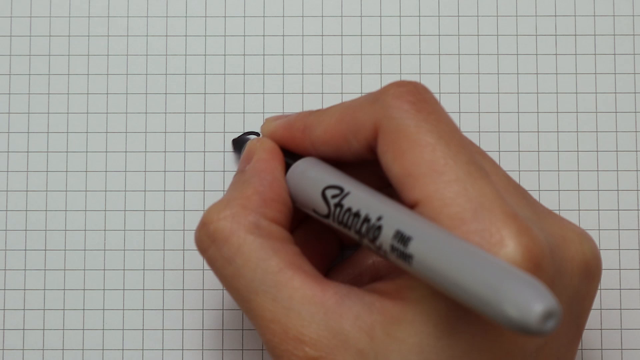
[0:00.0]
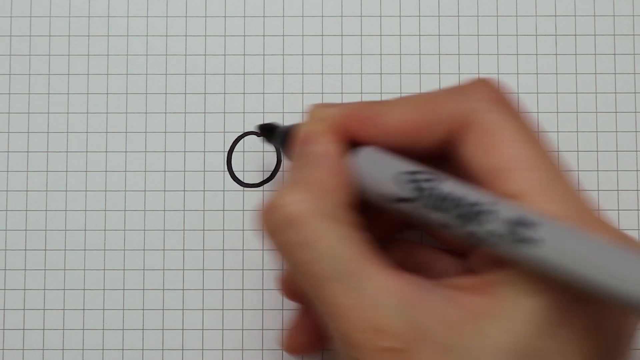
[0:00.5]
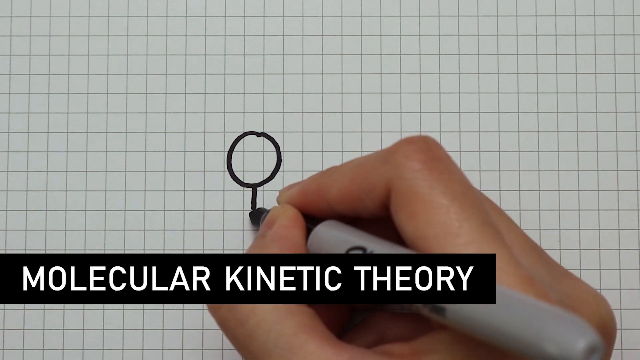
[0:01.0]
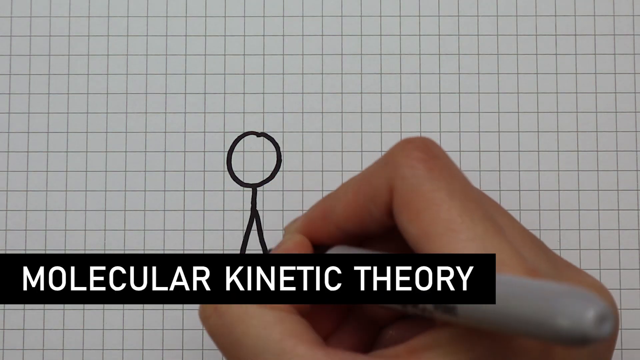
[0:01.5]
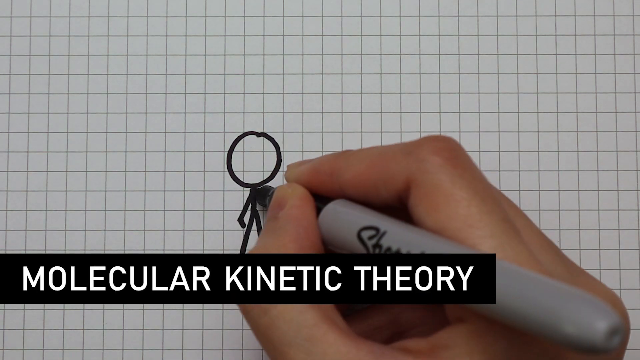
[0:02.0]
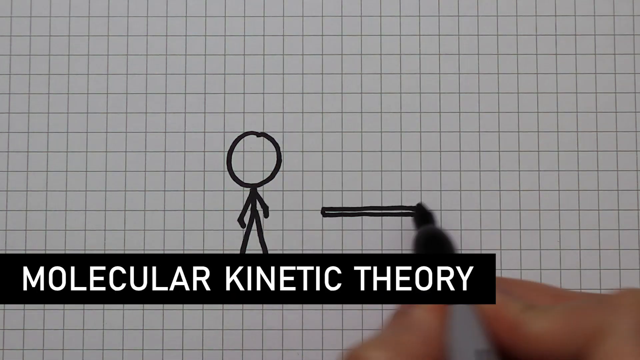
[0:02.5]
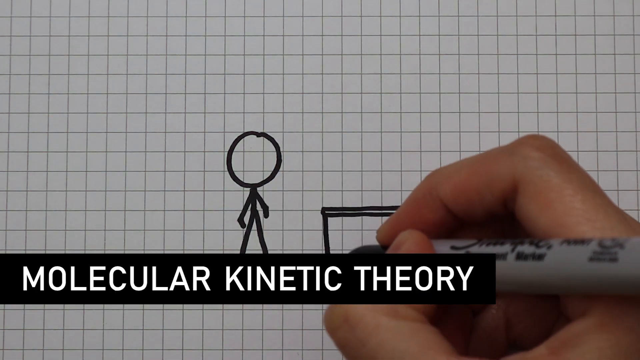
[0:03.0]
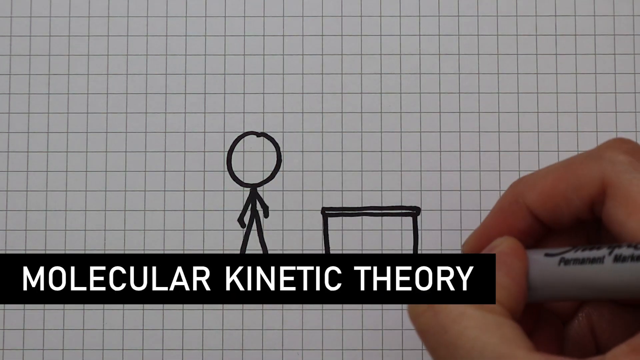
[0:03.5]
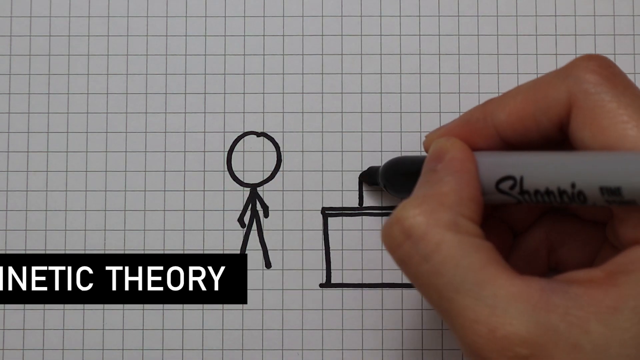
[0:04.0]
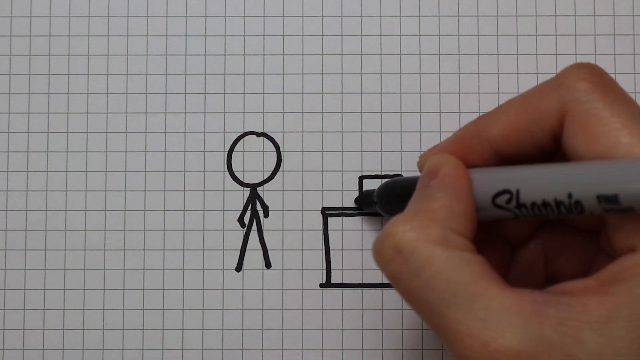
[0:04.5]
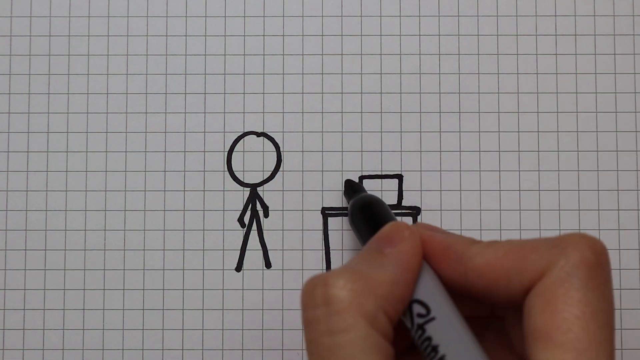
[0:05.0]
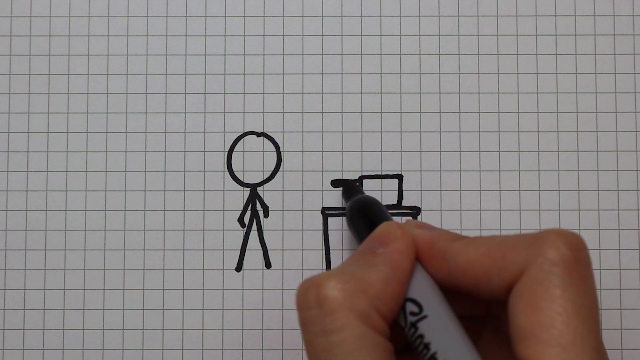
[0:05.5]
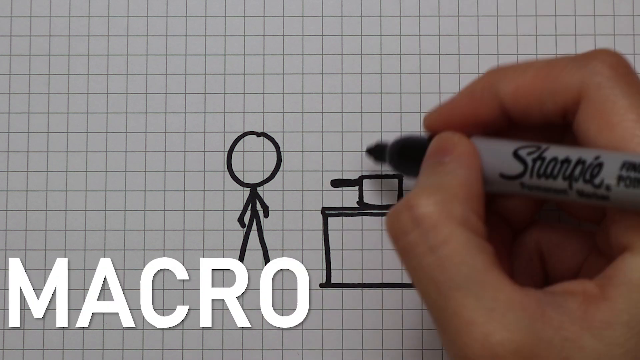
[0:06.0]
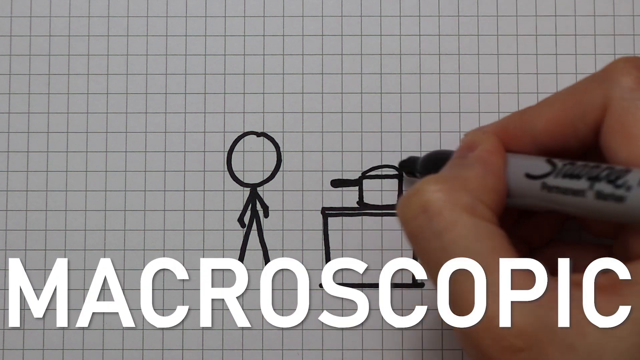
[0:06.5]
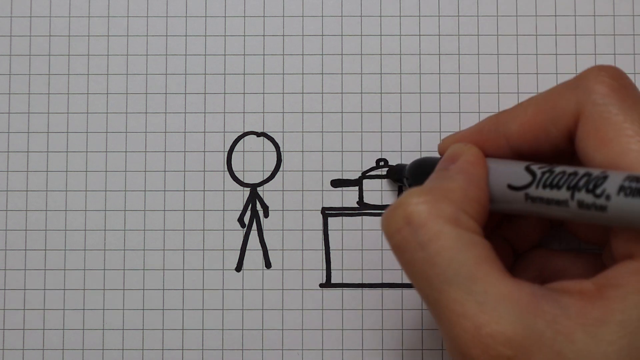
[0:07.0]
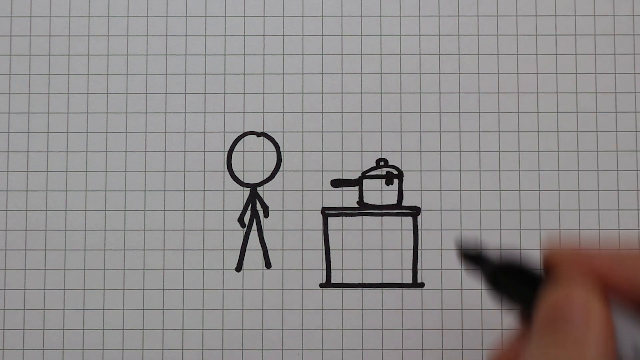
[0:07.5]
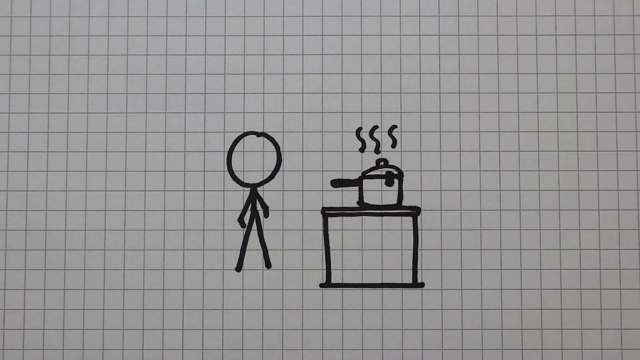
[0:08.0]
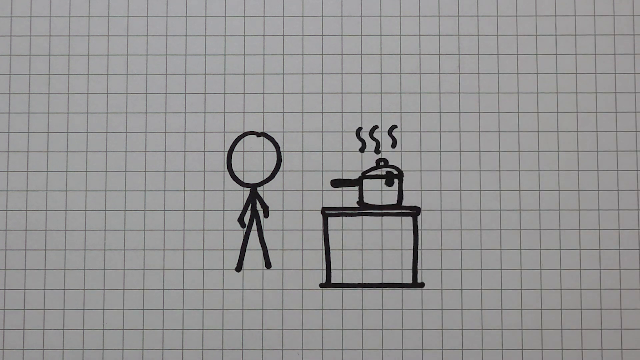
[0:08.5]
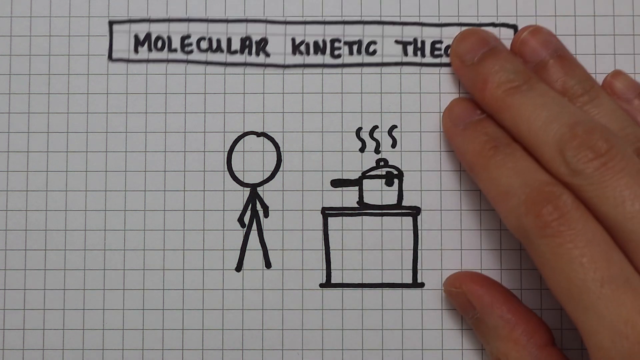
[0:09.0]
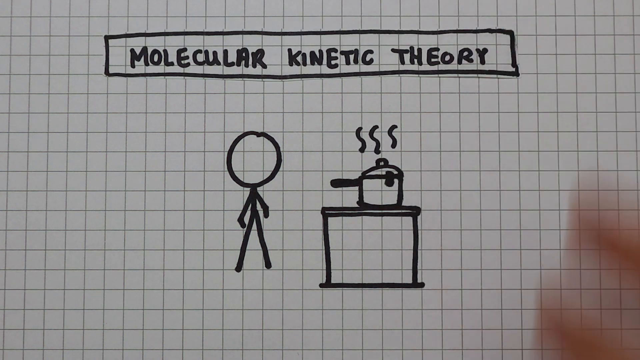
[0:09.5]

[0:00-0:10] The backdrop is a white, ivory page covered in multiple square grid lines. In the center is an ivory, pinkish hand holding a Sharpie marker between the thumb and forefinger. The word "Sharpie" is on the middle portion of the pen; the mid portion is gray down to about a fourth from the bottom, and below that it is black. The tip draws a circle, starting from the middle and going clockwise, then a straight line down, with lines slightly to the left and slightly to the right connecting to it. Lines come diagonally down from the shoulders, with small lines at the bottom. The words "molecular kinetic theory" appear at the top of the drawing: the hand holds an animated piece of paper with the title and pushes it up to the top.